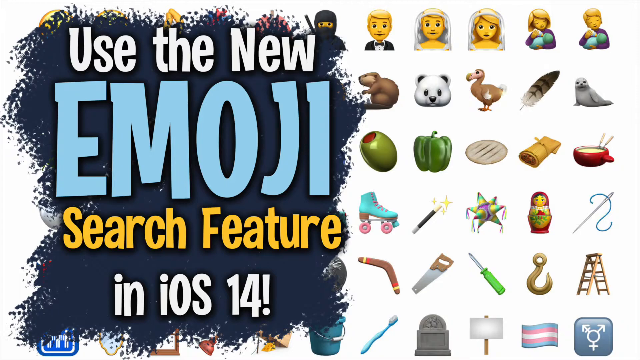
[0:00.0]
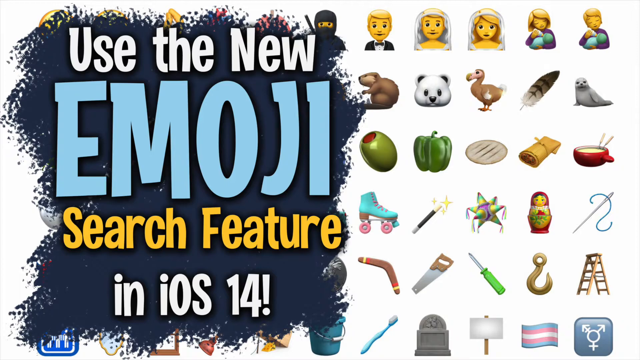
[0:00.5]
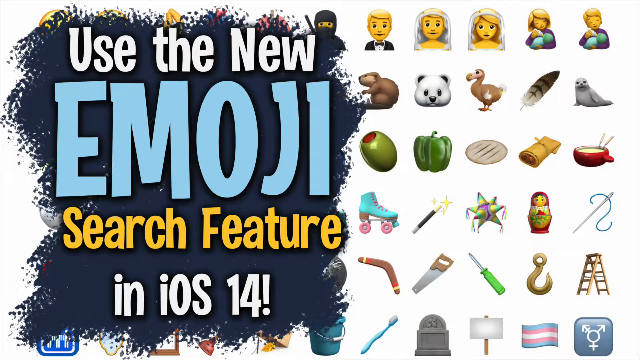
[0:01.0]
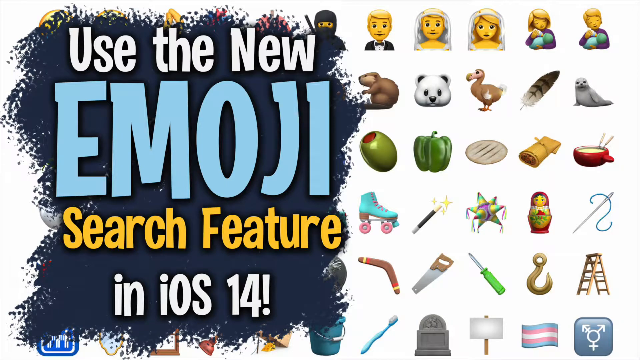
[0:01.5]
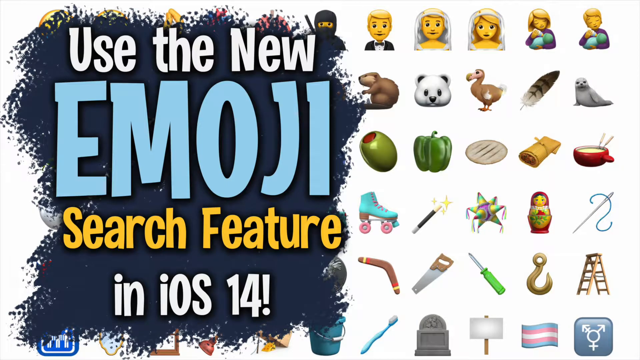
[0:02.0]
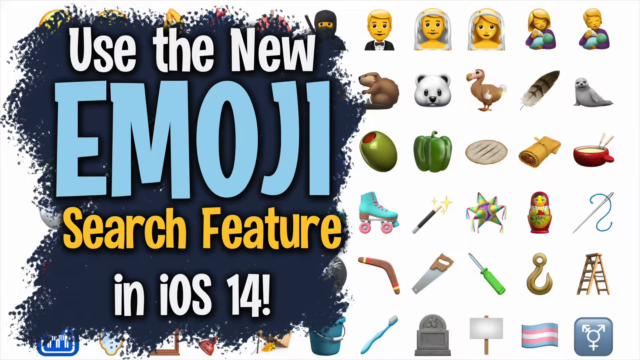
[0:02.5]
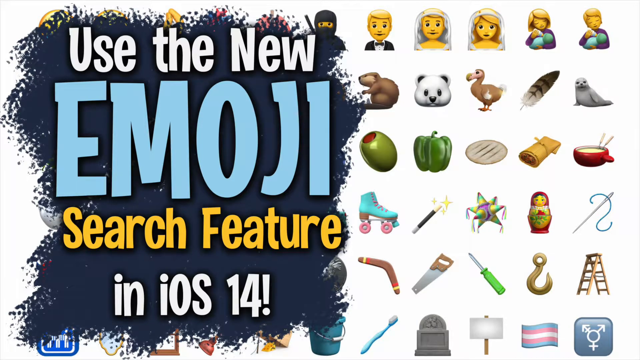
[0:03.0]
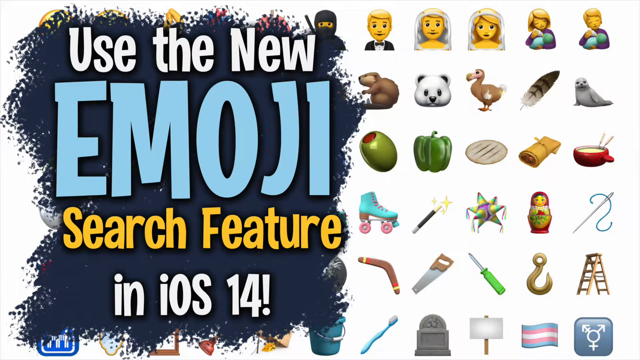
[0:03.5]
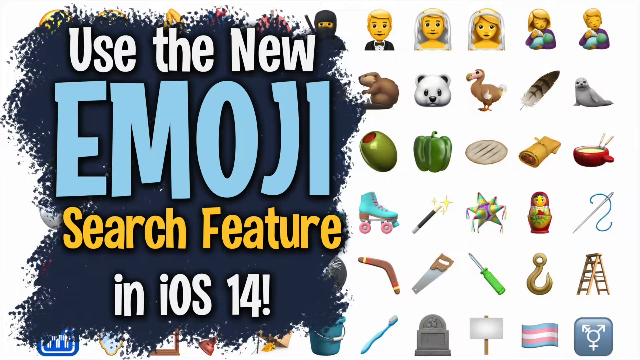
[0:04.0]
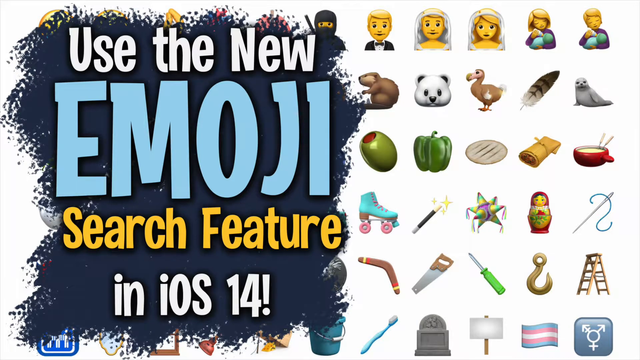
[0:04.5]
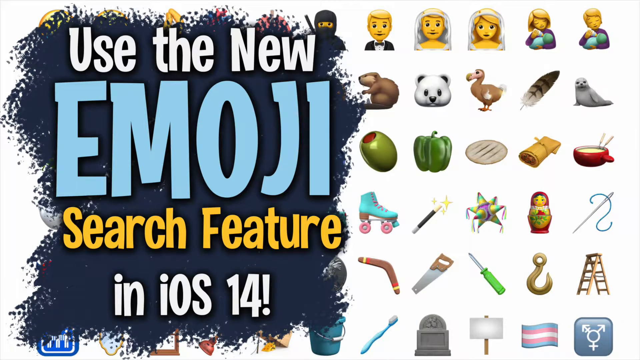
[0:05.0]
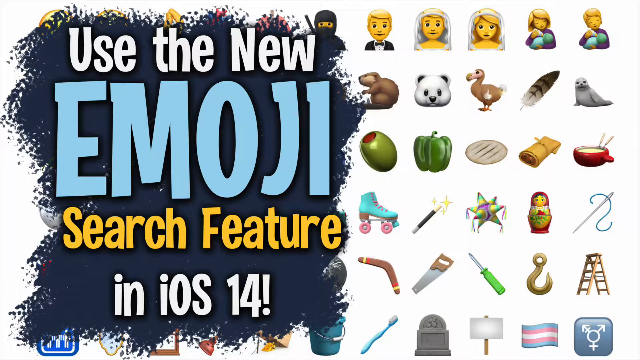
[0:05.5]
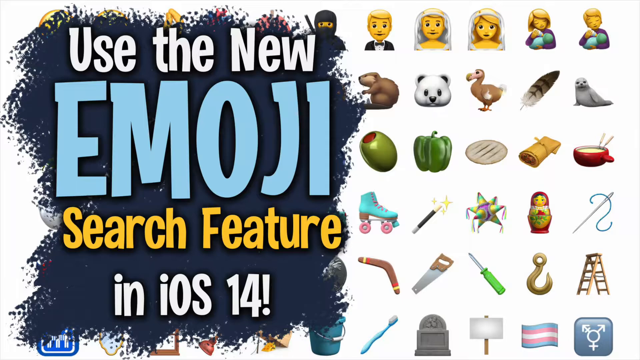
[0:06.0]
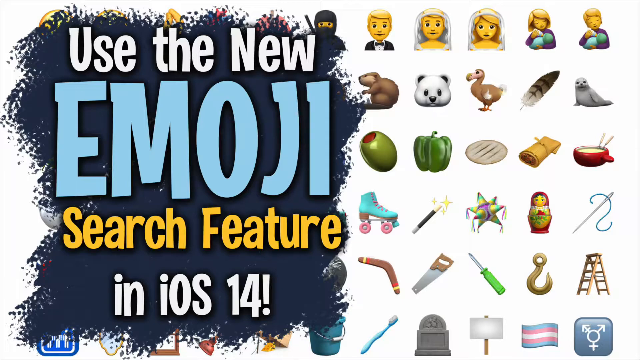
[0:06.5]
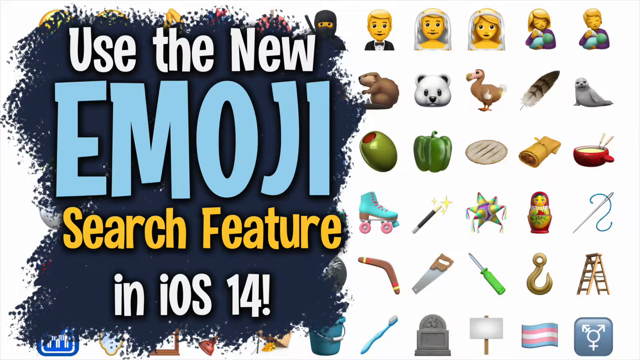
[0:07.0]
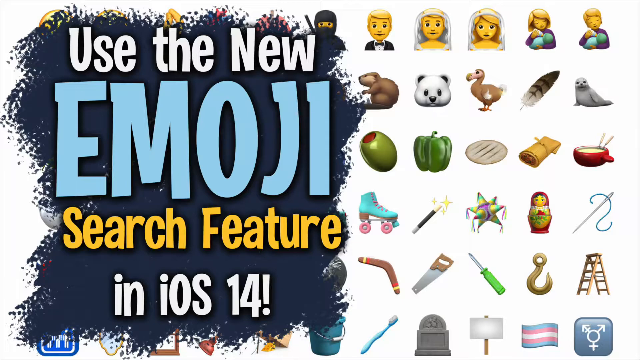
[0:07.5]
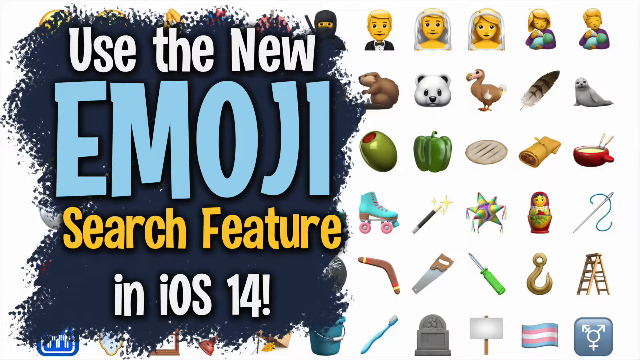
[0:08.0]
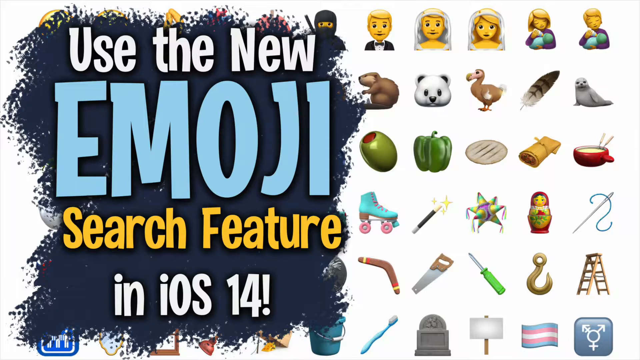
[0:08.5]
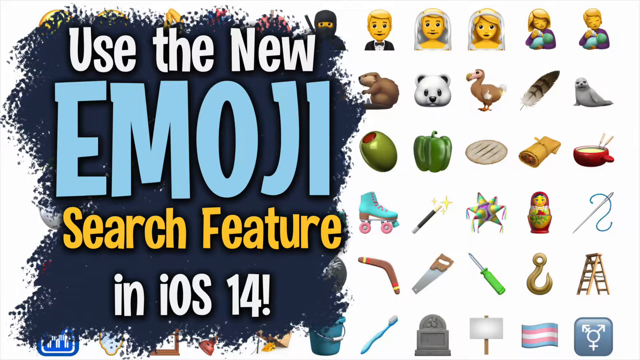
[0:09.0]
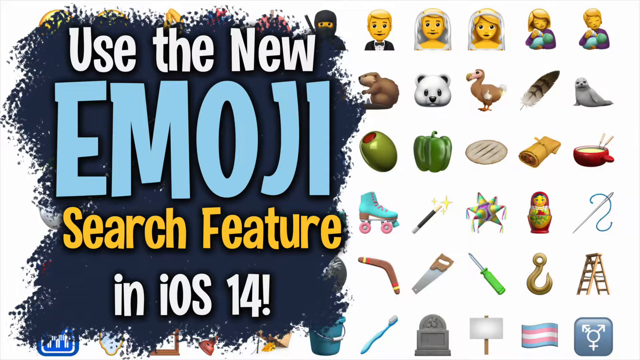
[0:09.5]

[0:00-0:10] The screen shows lots of emojis in the background, and on the left-hand side there is something like a blue smudge with the words "use the new emoji search feature in iOS 14" on top of it. "Use the new" and "in iOS 14" are in white, "emoji" is in very large light blue letters, and "search feature" is in yellow letters.